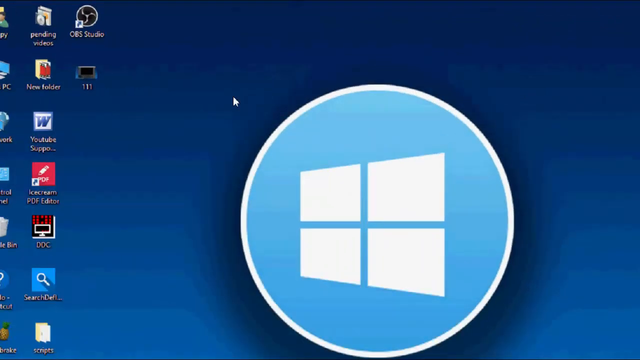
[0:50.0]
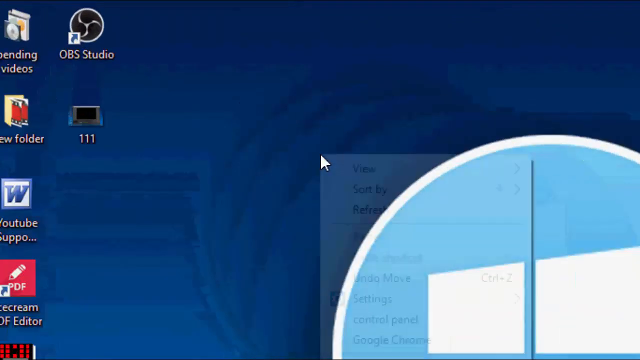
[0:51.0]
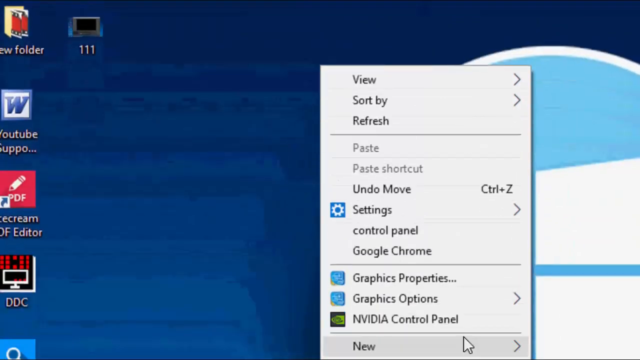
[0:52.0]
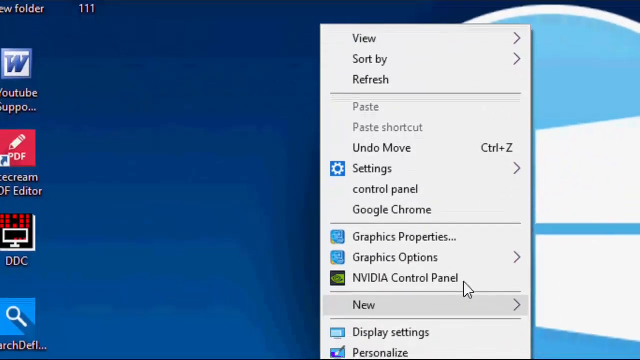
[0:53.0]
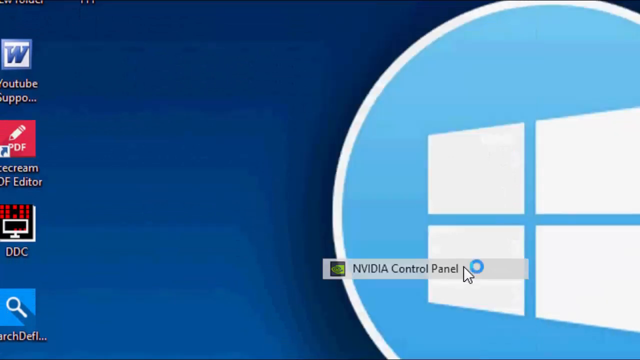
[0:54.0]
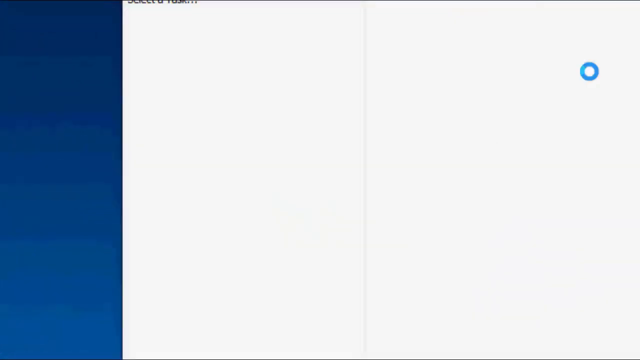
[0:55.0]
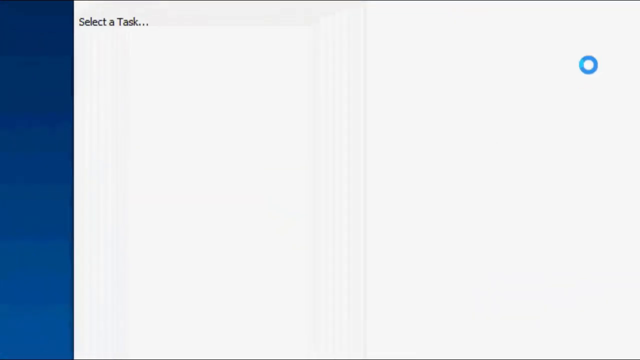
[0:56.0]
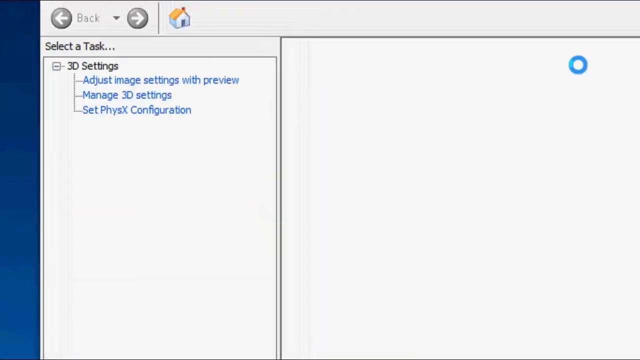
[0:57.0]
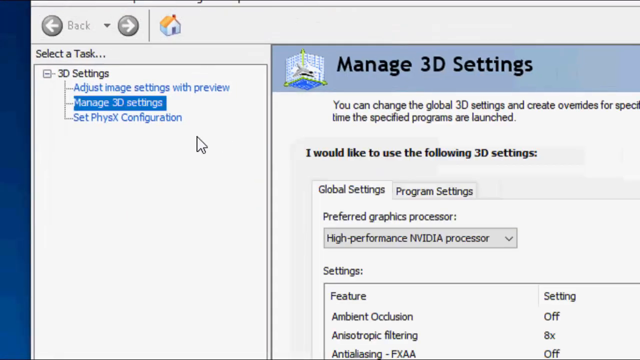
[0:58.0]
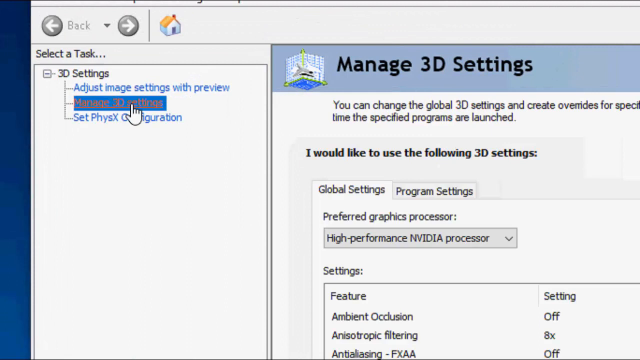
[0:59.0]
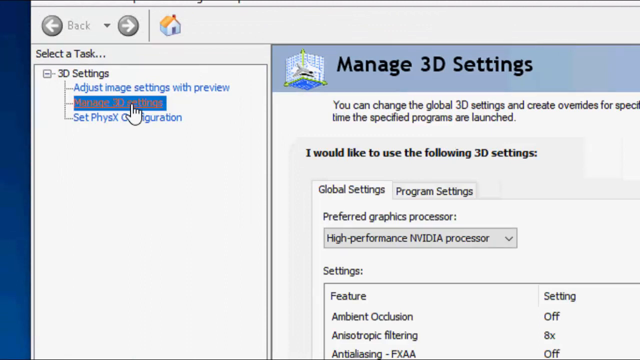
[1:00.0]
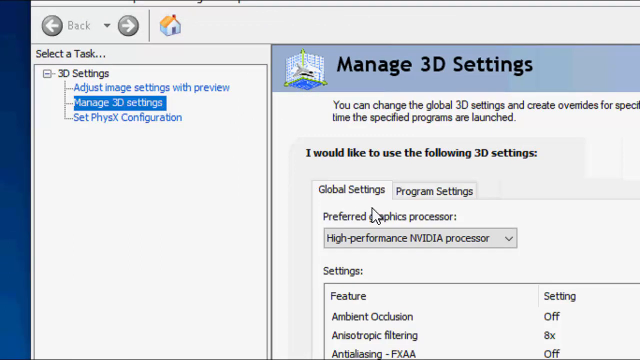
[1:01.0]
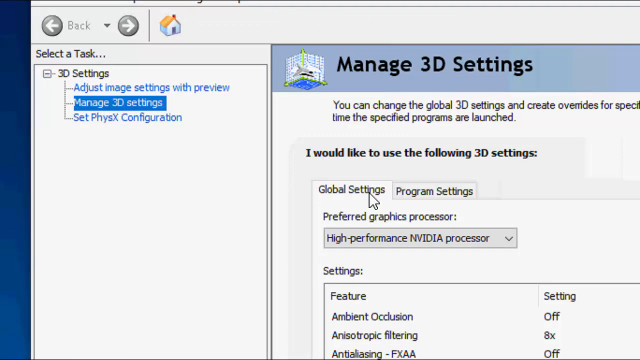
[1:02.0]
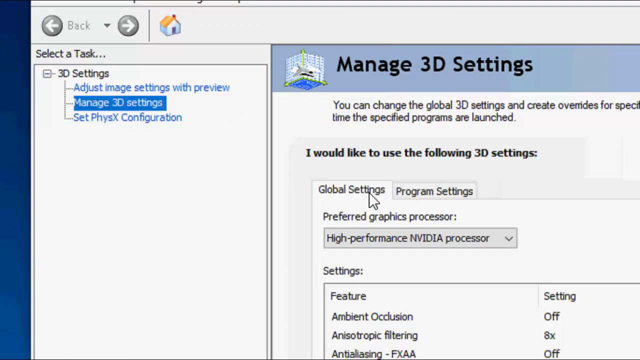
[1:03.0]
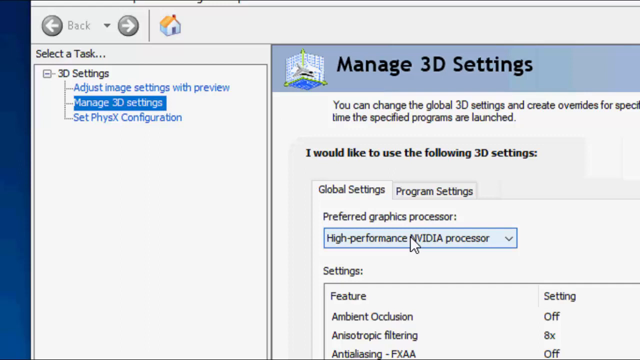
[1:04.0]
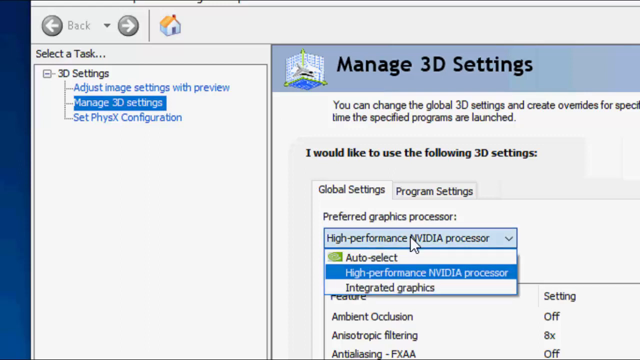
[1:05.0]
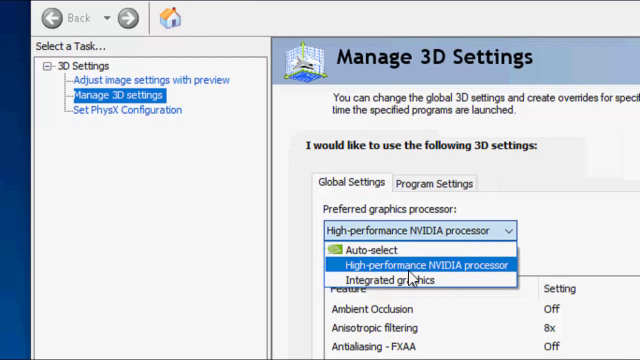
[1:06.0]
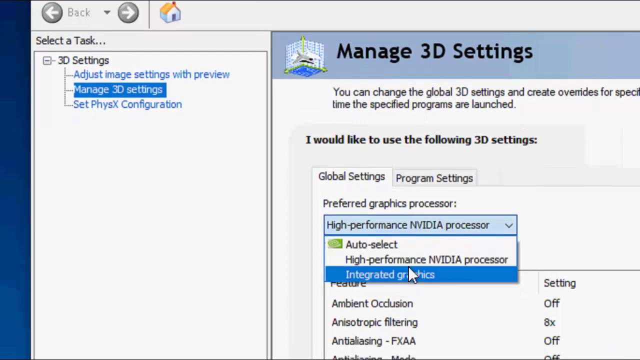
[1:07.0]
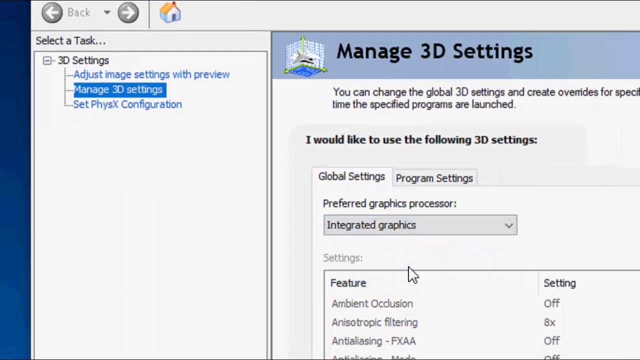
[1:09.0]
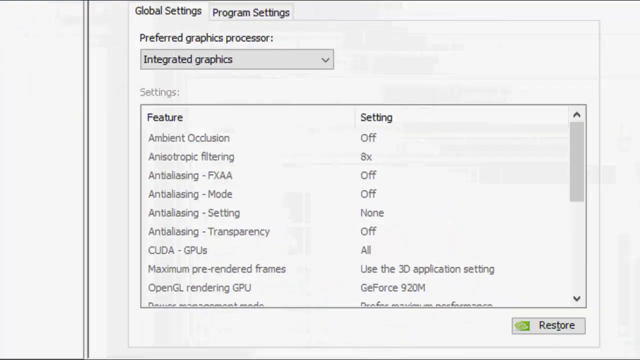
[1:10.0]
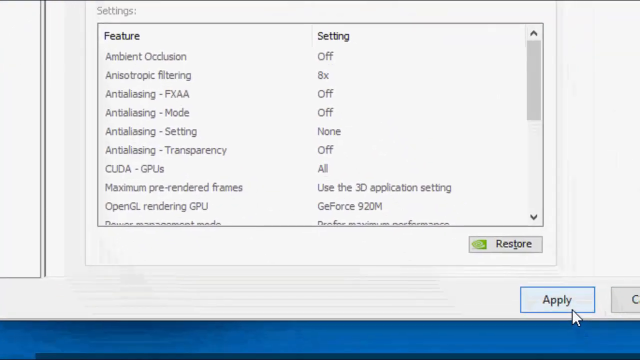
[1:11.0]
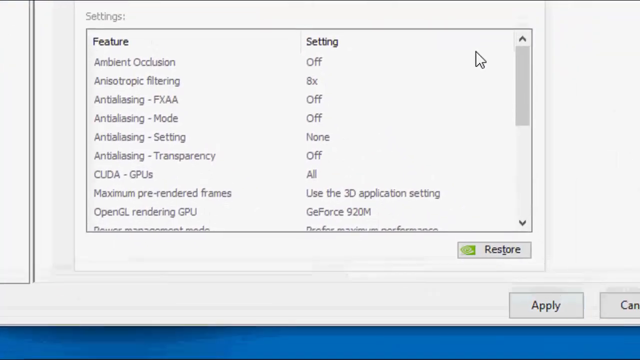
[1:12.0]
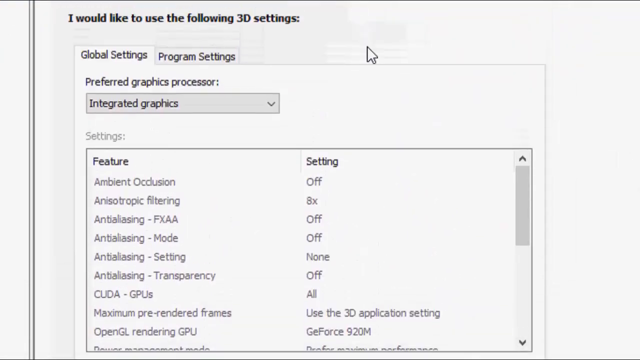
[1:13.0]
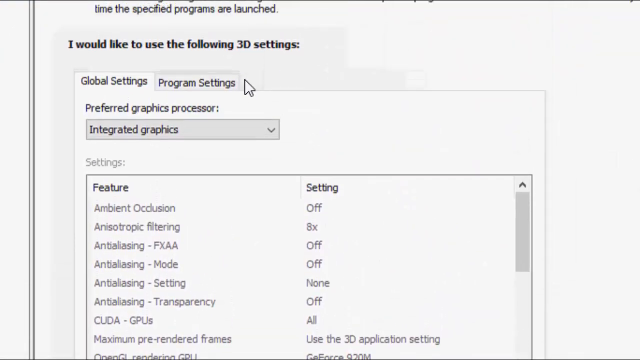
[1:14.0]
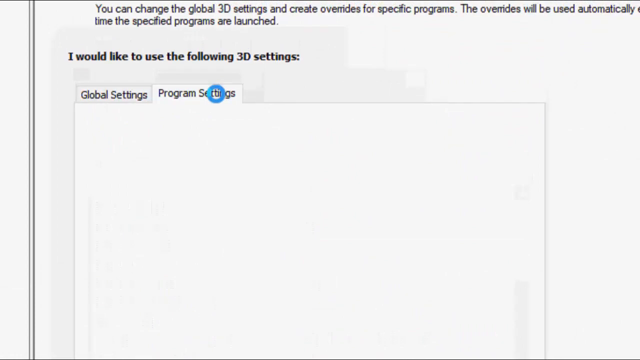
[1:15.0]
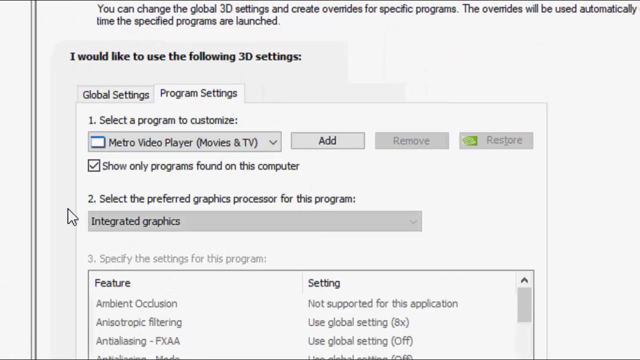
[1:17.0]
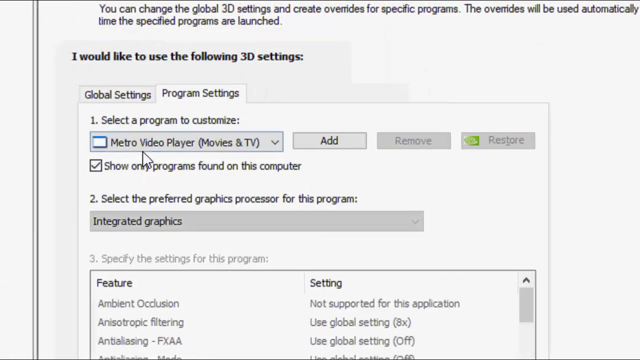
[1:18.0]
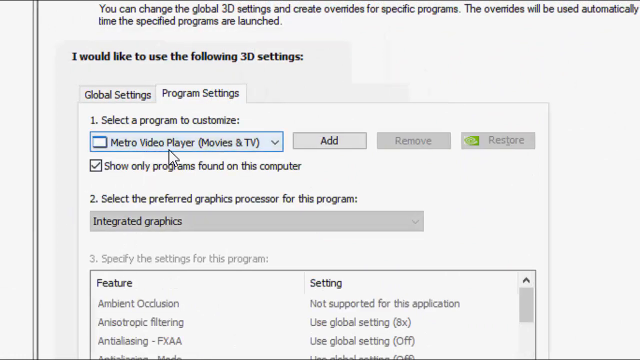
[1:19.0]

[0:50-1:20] The person continues using the Windows computer. The view zooms in on a portion of the screen with the dark blue background. They right-click the screen and scroll down to NVIDIA Control Panel, and a new window pops up on a page titled "Manage 3D Settings". It says "You can change the global 3D settings and create overrides for" specified programs, followed by "I would like to use the following 3D settings", with Global Settings and Program Settings, and "Preferred graphics processor" set to "High-performance NVIDIA processor". On the left side they select Manage 3D Settings. In the Global Settings section they open the Preferred graphics processor drop-down, which has three options: Auto-select, High-performance NVIDIA processor and Integrated graphics. They select Integrated graphics, scroll down to its settings, then go to Program Settings and look at an entry reading "Metro Video Player".